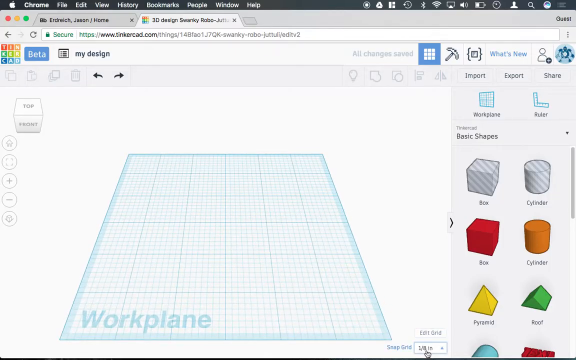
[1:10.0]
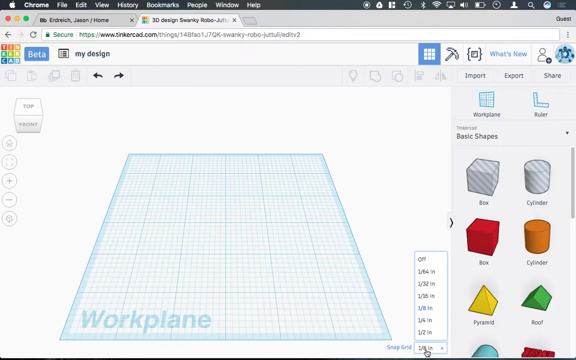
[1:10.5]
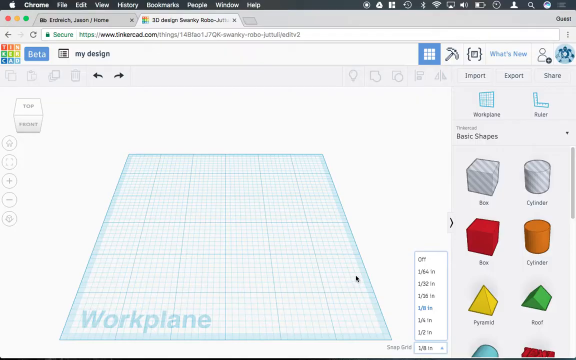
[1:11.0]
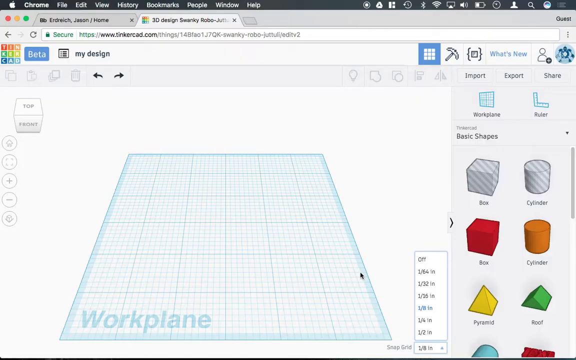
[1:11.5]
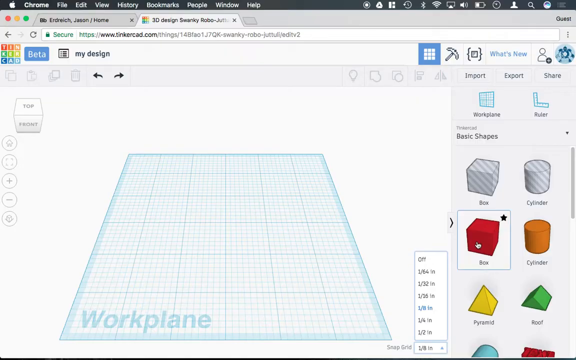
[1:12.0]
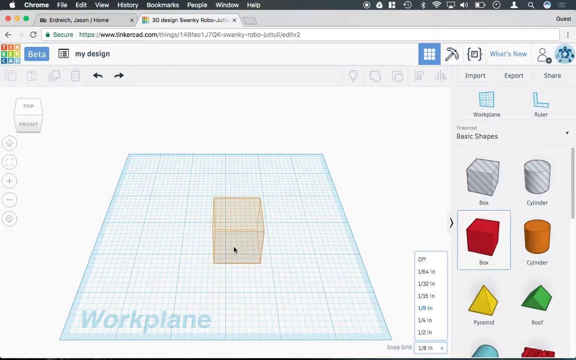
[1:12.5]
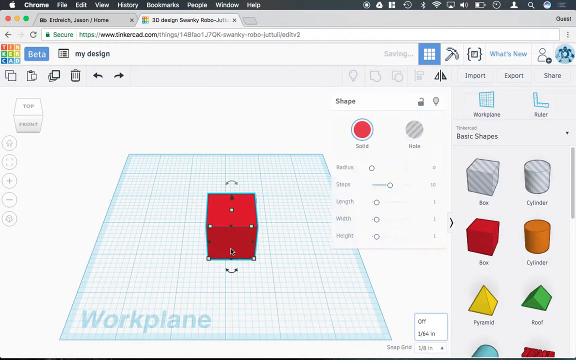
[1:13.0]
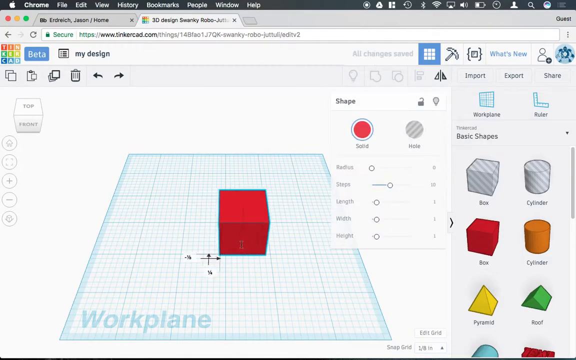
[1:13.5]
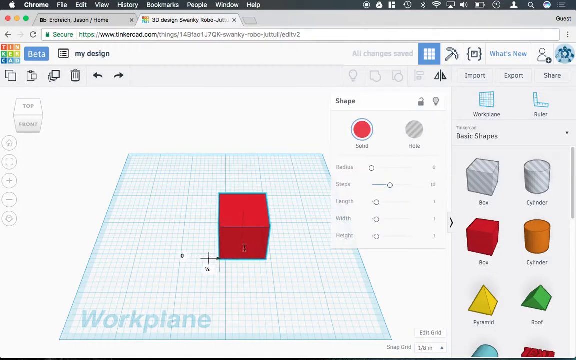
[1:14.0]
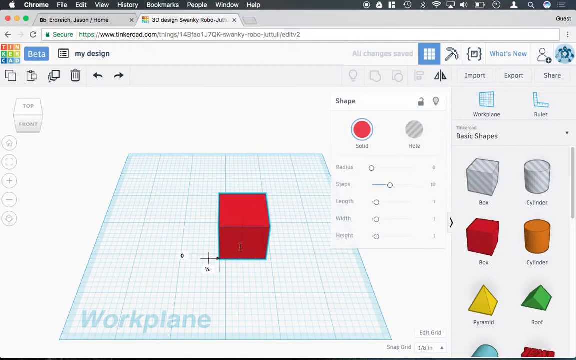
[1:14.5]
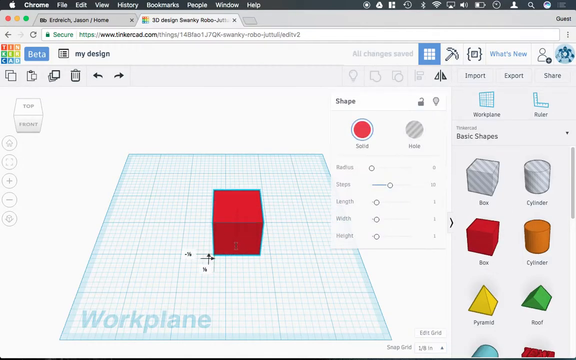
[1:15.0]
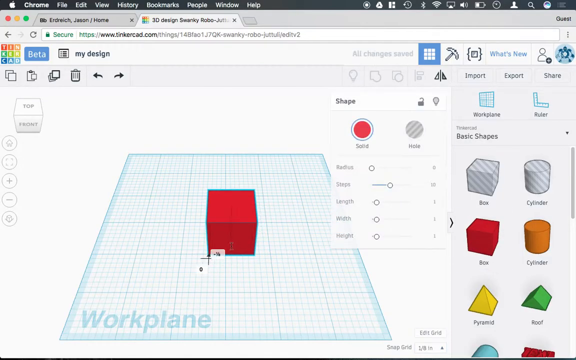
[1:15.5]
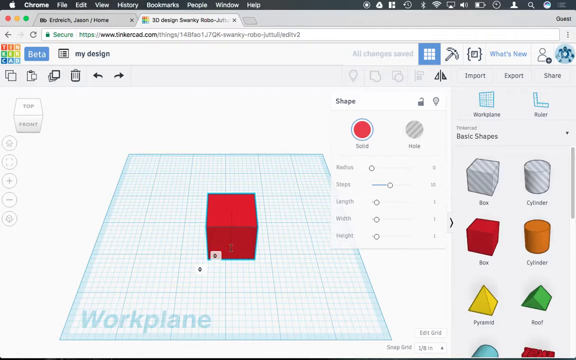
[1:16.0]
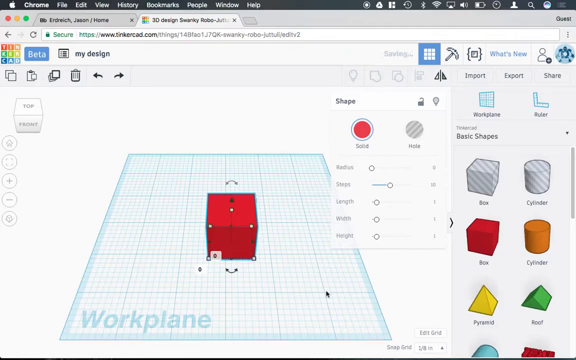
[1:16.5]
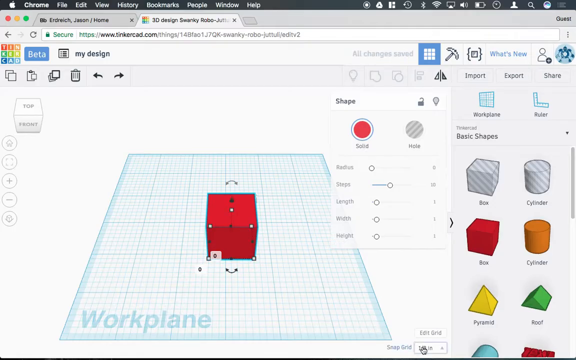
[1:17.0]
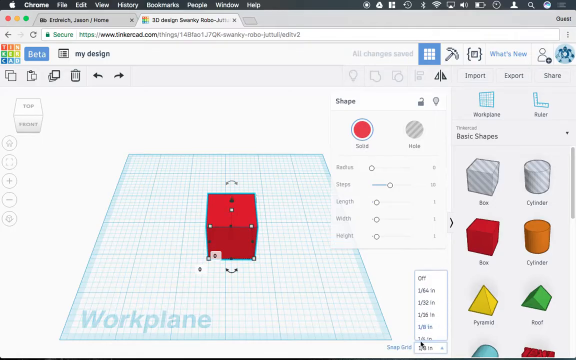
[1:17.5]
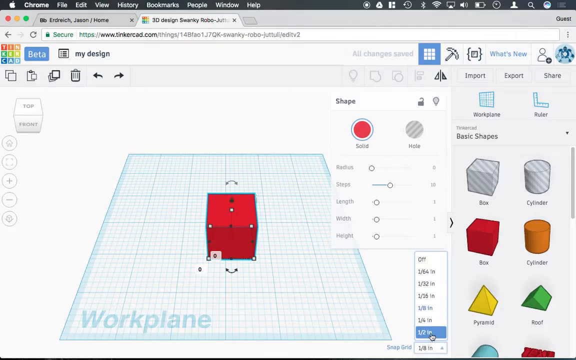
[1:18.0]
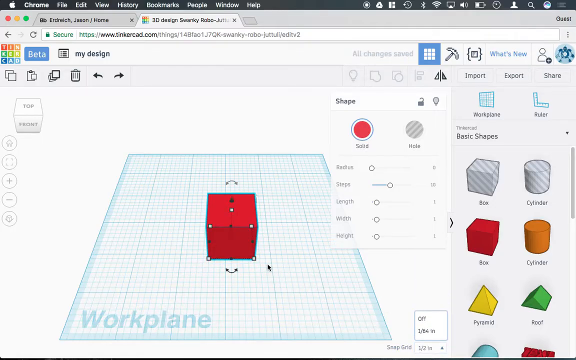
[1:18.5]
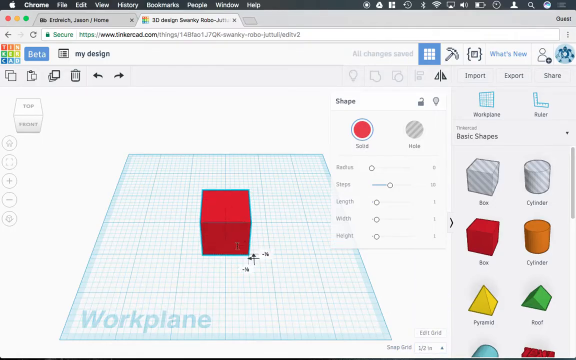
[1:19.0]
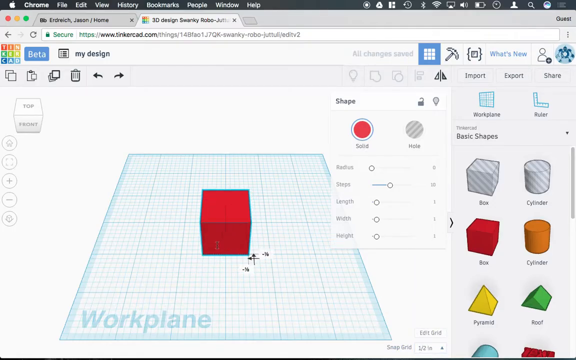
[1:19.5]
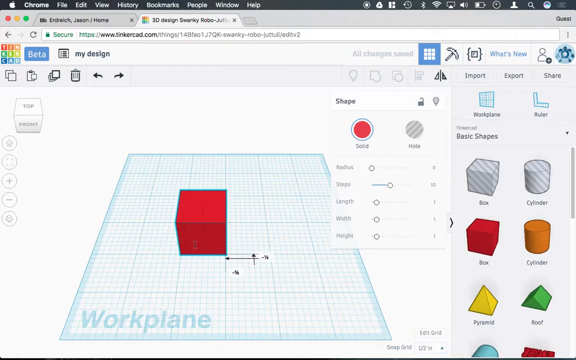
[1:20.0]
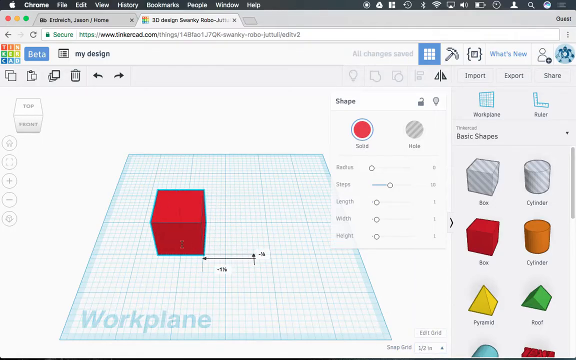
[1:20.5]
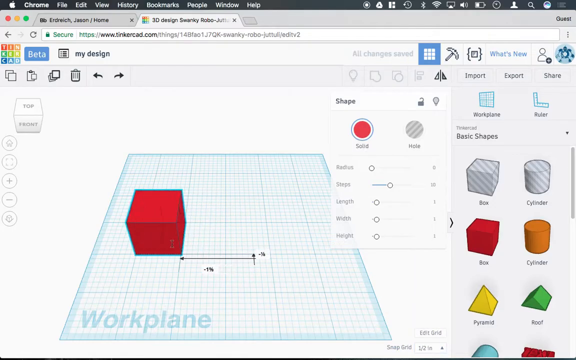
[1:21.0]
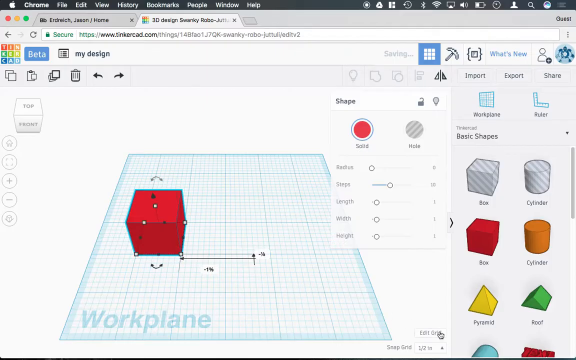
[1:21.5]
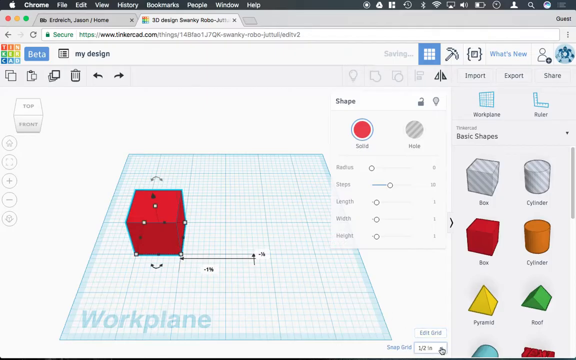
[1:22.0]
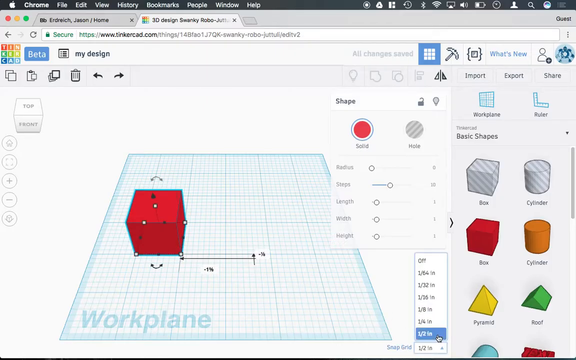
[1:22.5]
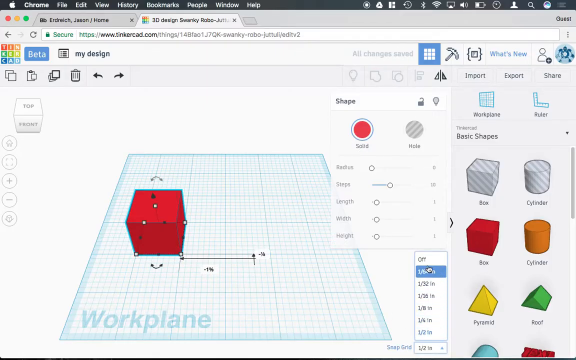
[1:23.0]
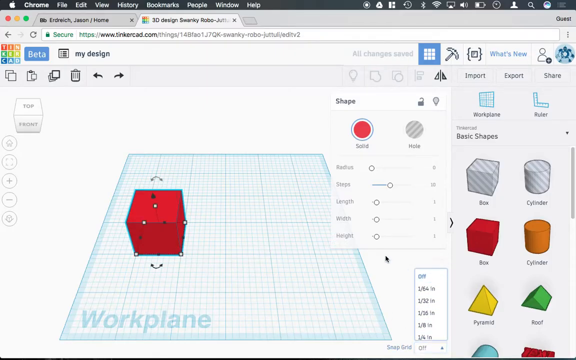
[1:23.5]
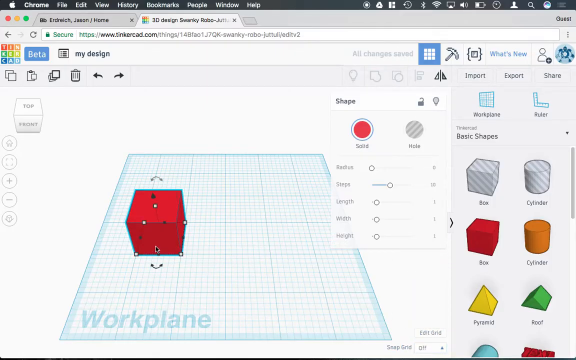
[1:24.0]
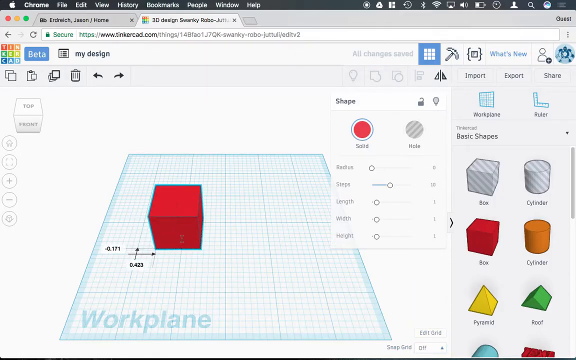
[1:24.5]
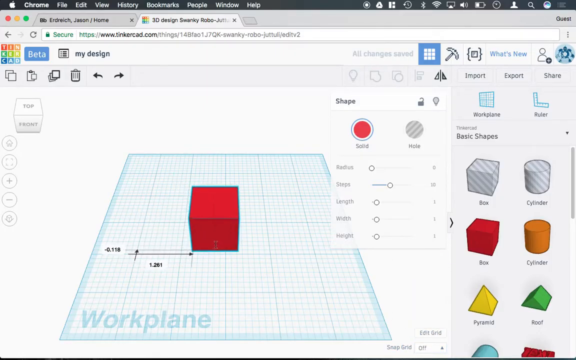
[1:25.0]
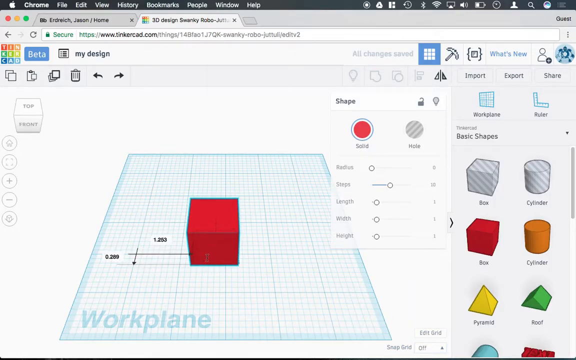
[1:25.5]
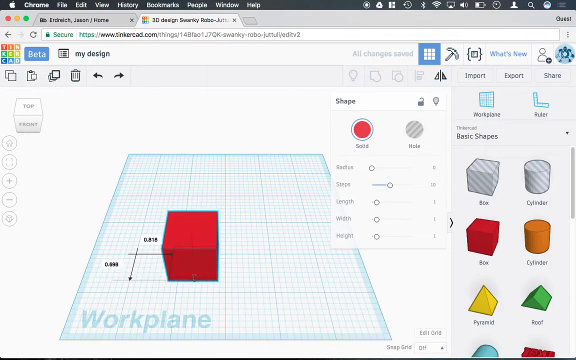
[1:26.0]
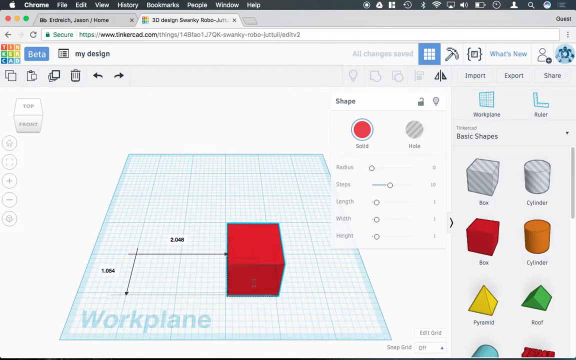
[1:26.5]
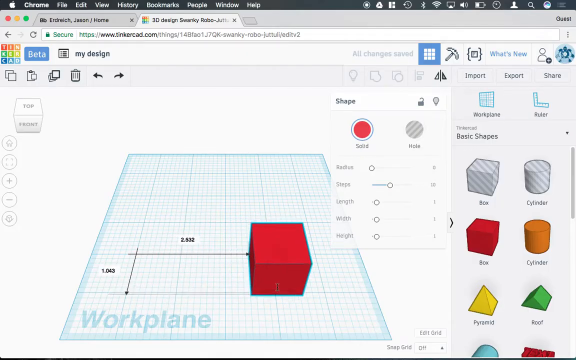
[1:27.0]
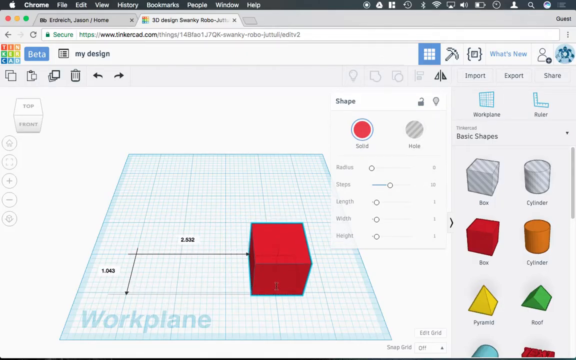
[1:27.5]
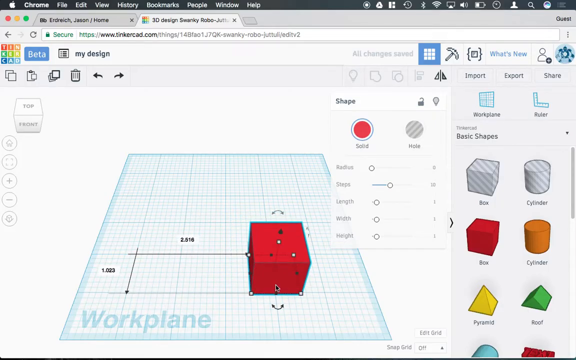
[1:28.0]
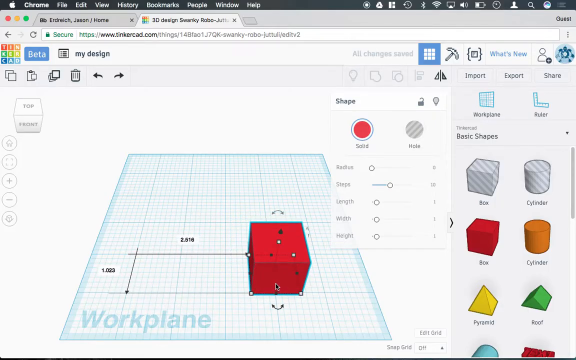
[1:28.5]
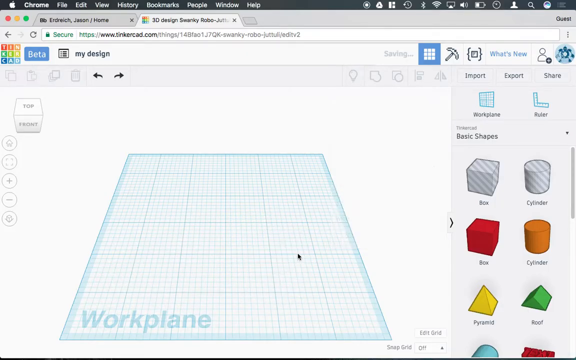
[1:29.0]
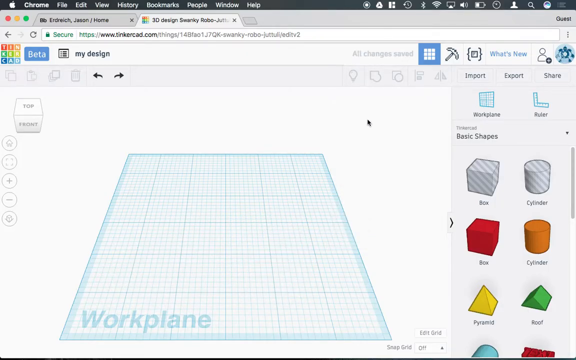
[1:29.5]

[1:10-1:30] The user drags a red cube-shaped shape labeled "box" from the right-hand corner of the screen into approximately the center of the grid on the work plane. A shape menu pops up with settings for the shape's color, radius, steps, length, width, and height. The user places the shape near the center of the work plane grid, then uses the snap grid function to move it leftward across the work plane in one-half-inch increments. The user then turns off the snap grid function and moves the cube freely in a counterclockwise direction. As the red box moves across the workplane, arrows with number labels appear in the up and down directions as well as the left and right directions, indicating how far the cube has moved since it was last placed.